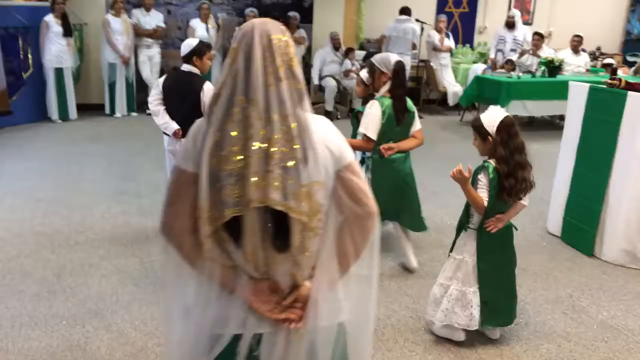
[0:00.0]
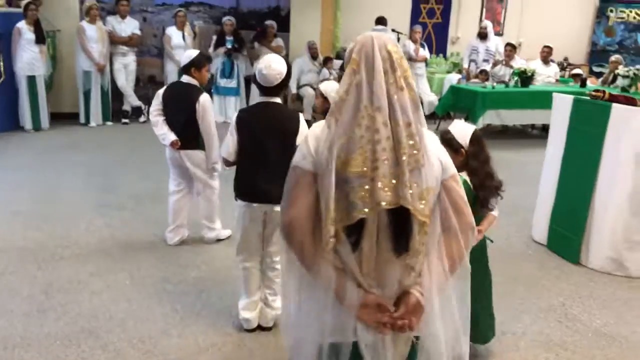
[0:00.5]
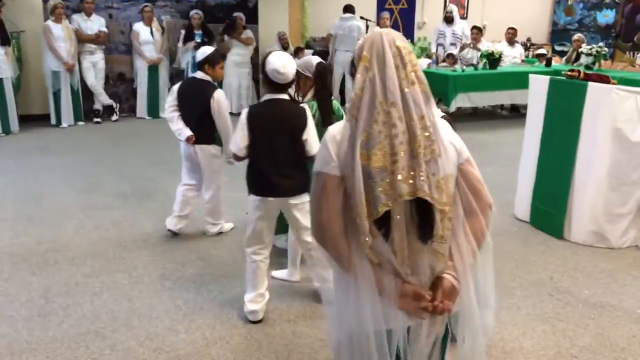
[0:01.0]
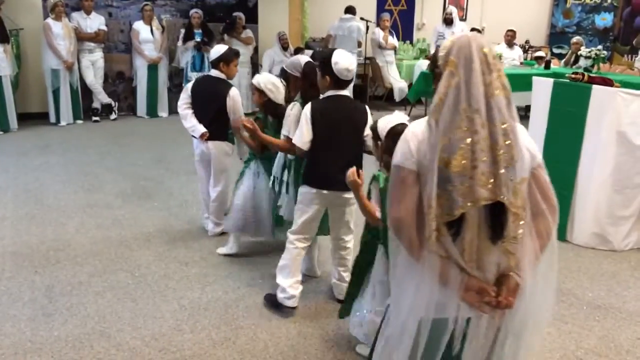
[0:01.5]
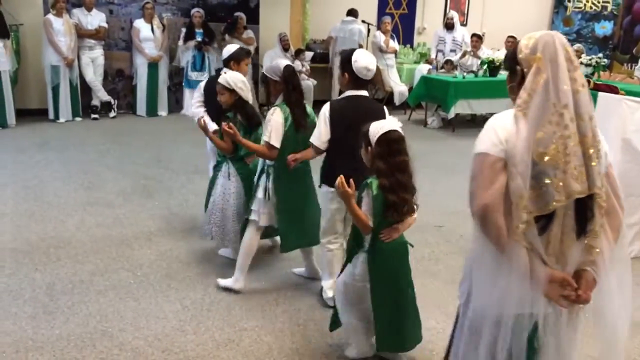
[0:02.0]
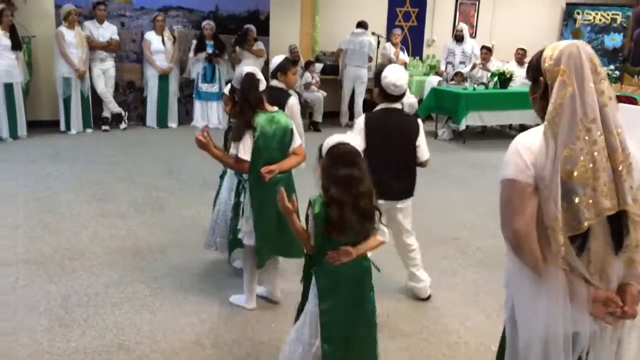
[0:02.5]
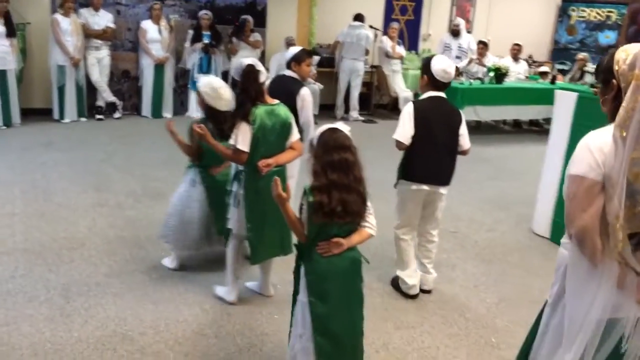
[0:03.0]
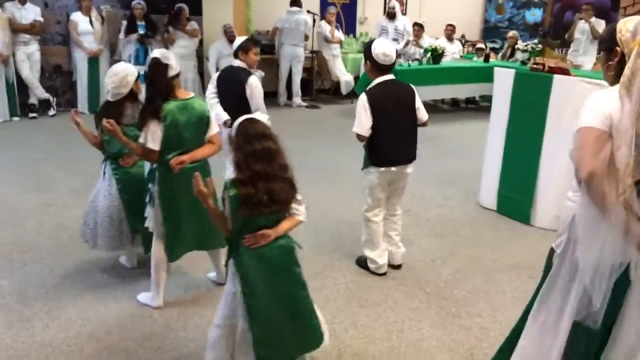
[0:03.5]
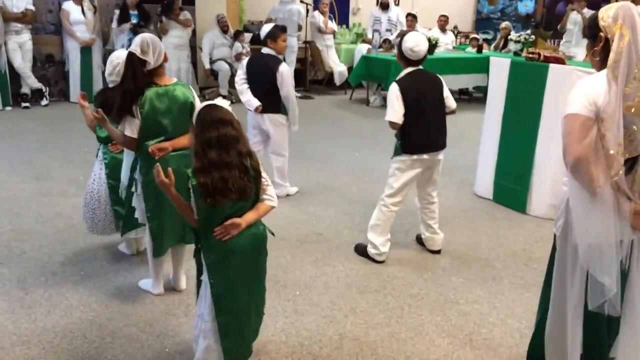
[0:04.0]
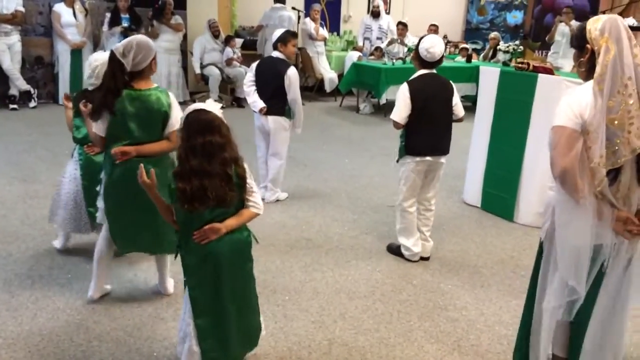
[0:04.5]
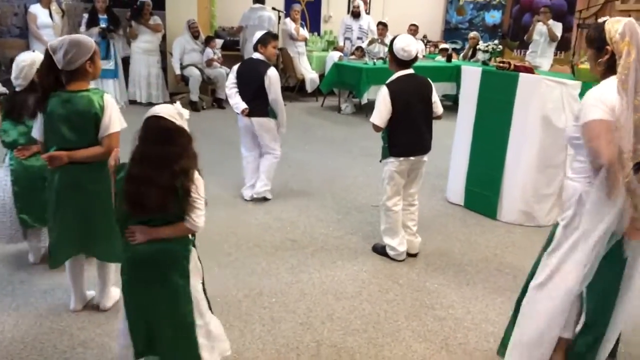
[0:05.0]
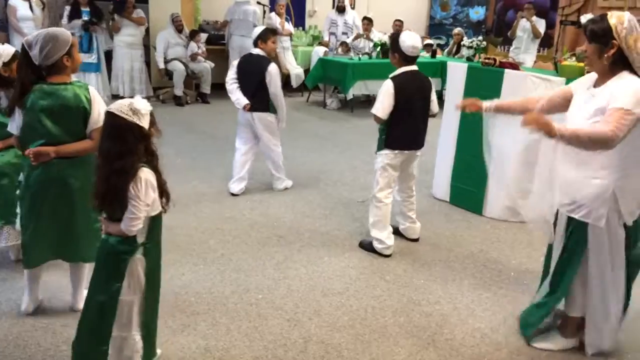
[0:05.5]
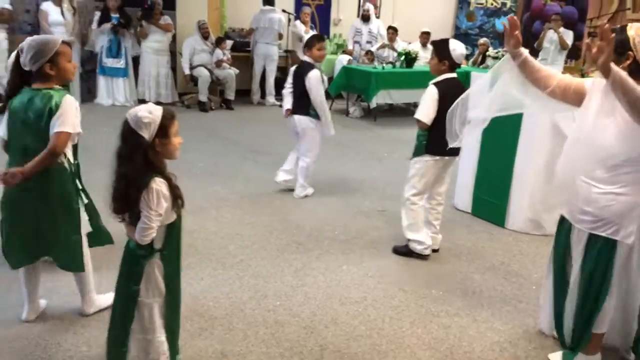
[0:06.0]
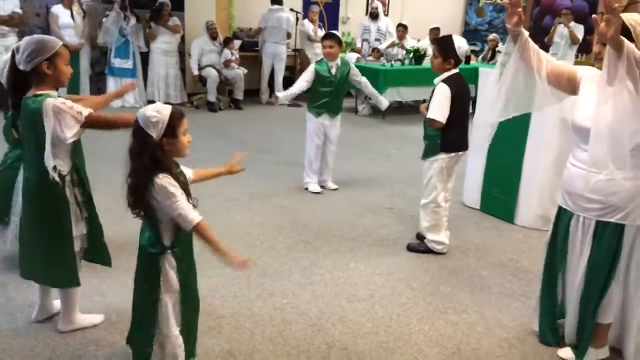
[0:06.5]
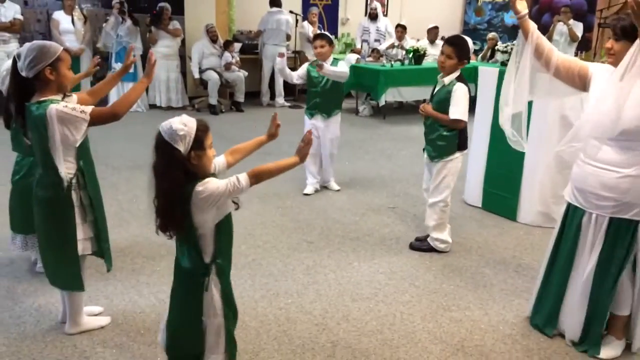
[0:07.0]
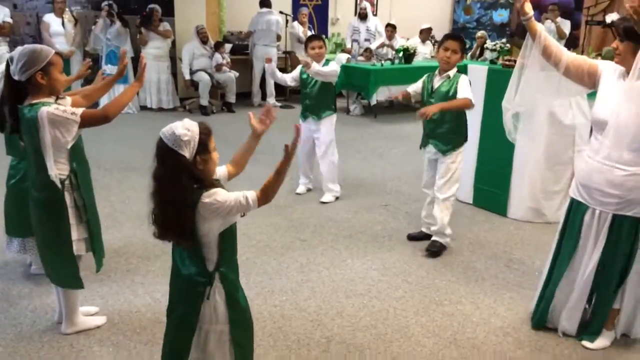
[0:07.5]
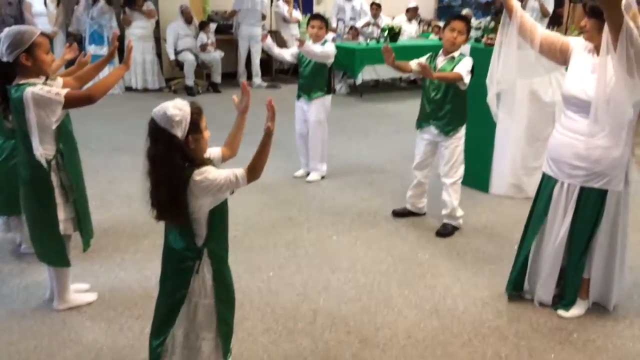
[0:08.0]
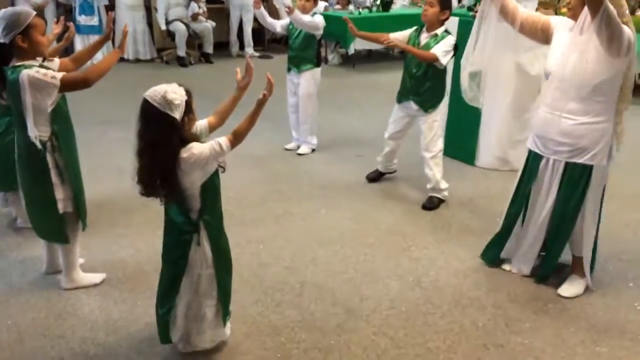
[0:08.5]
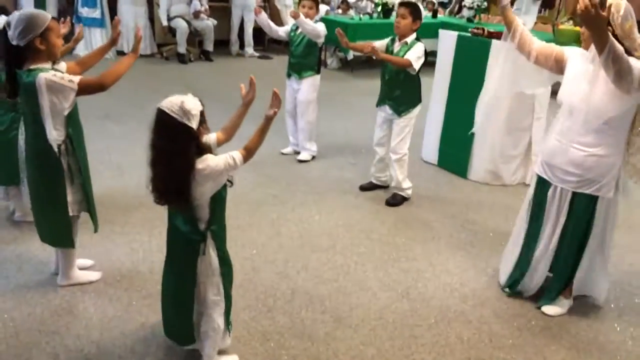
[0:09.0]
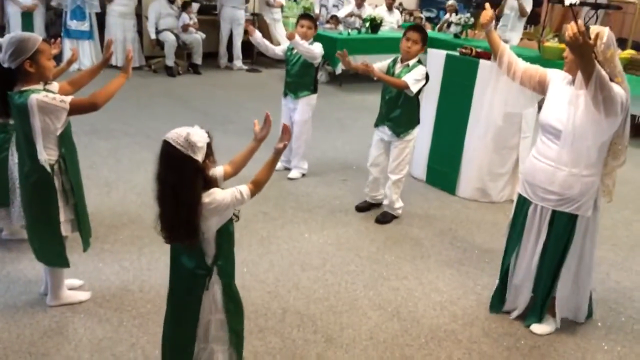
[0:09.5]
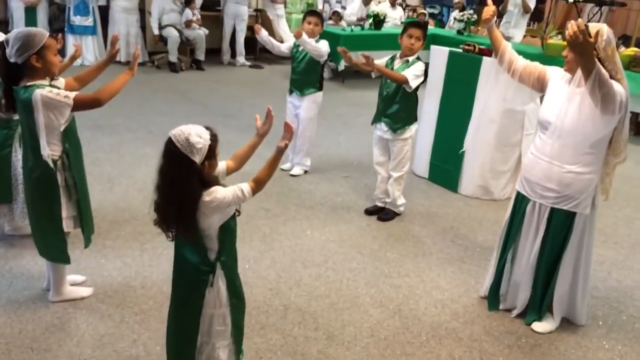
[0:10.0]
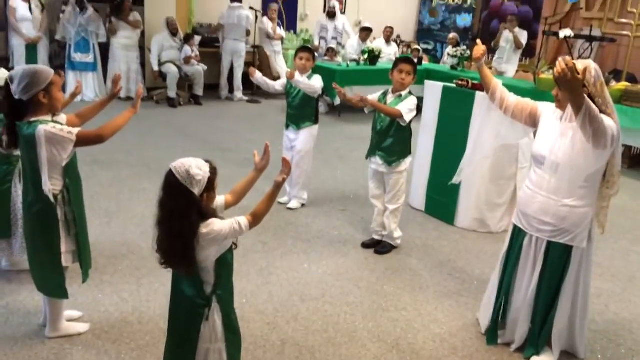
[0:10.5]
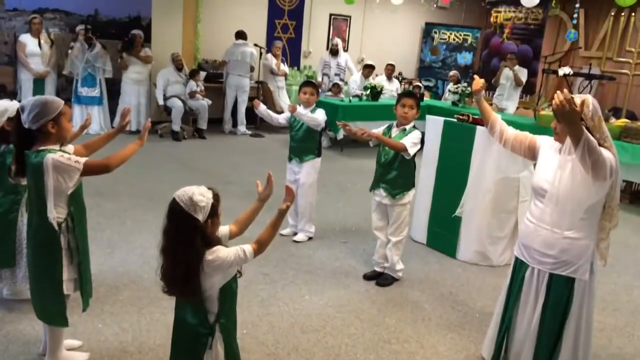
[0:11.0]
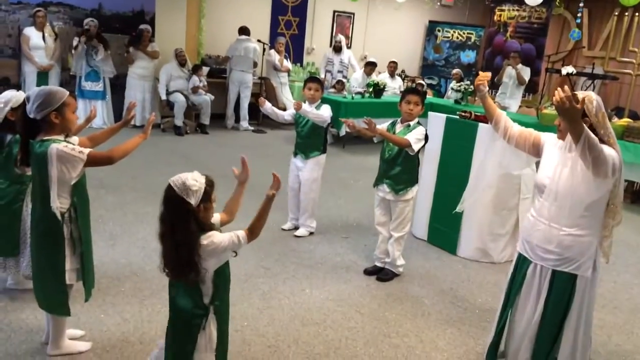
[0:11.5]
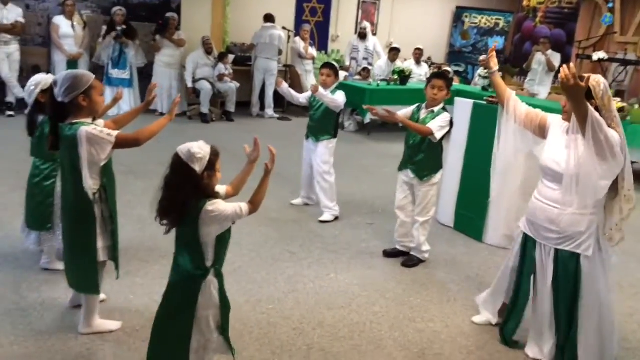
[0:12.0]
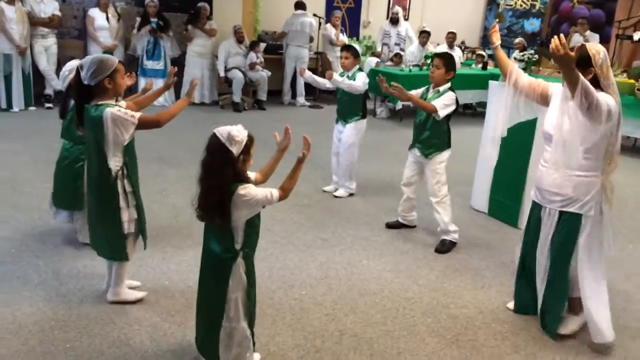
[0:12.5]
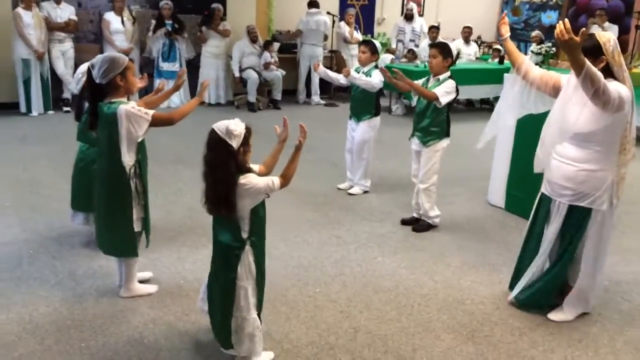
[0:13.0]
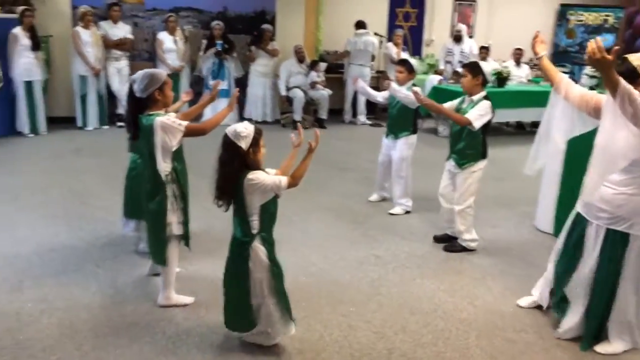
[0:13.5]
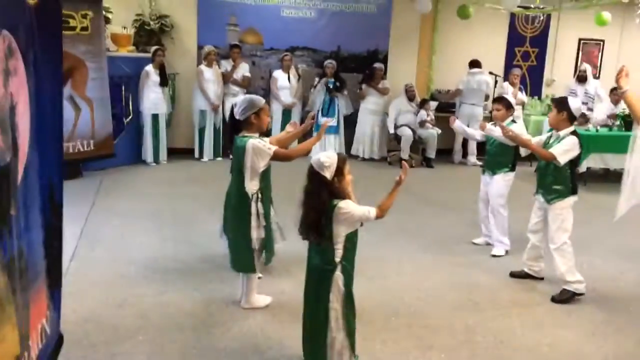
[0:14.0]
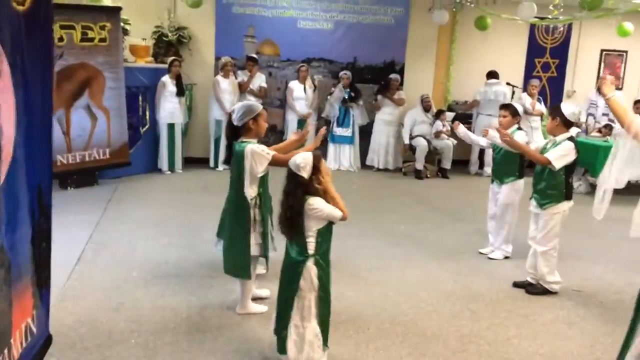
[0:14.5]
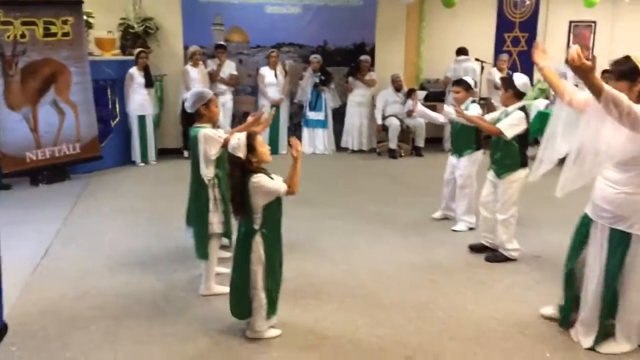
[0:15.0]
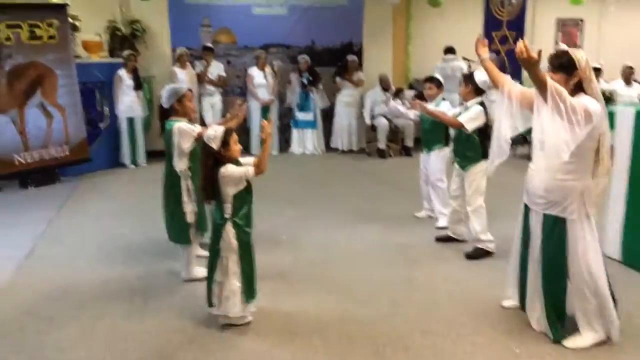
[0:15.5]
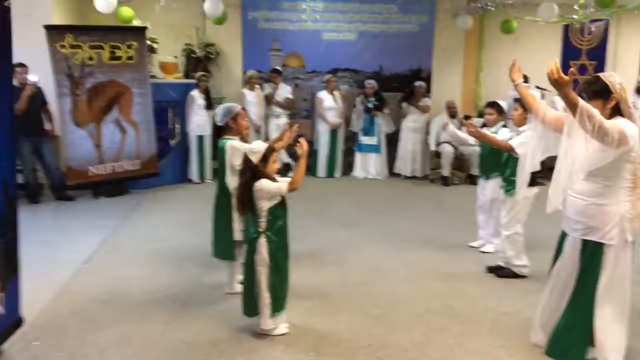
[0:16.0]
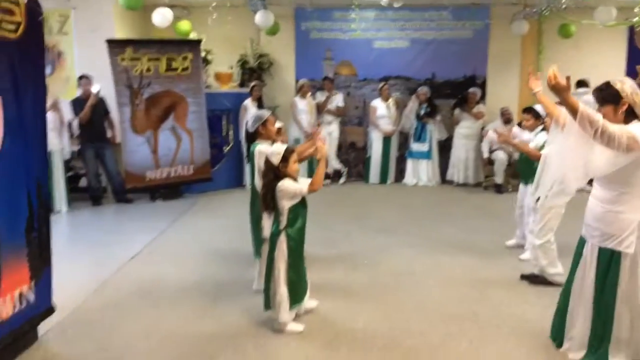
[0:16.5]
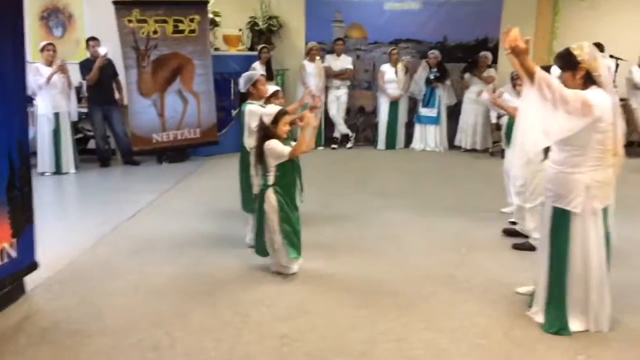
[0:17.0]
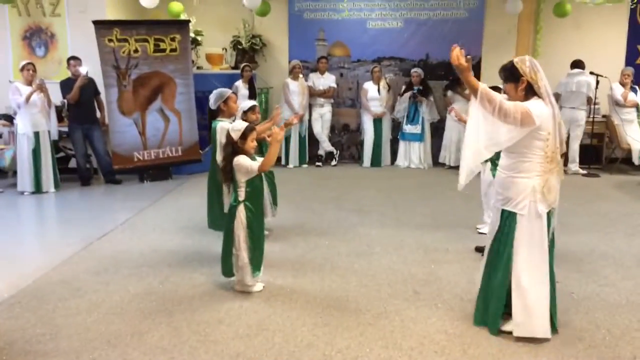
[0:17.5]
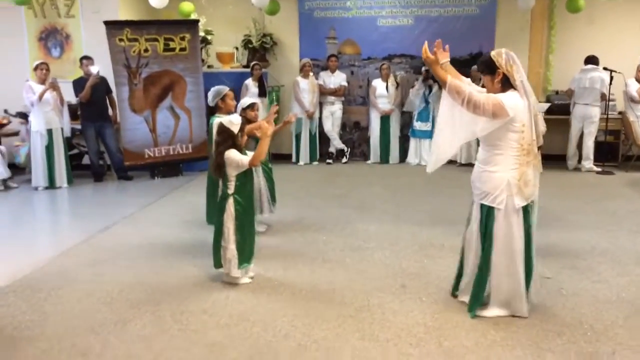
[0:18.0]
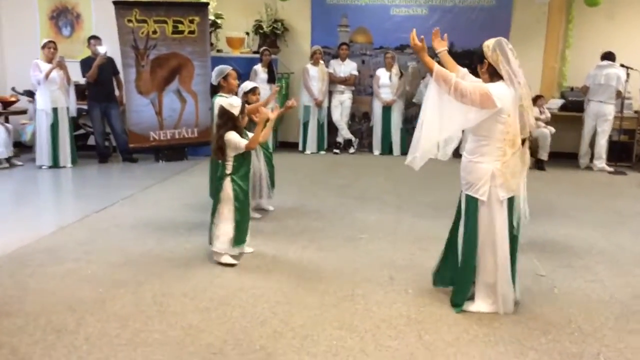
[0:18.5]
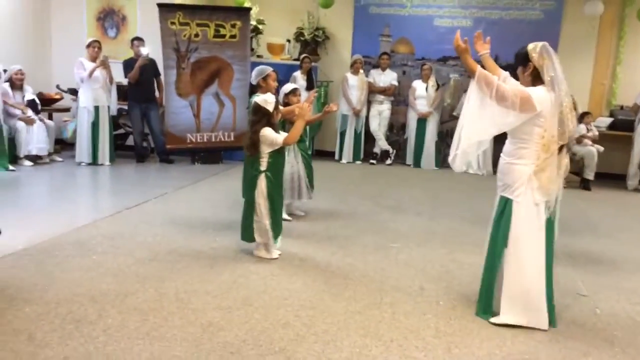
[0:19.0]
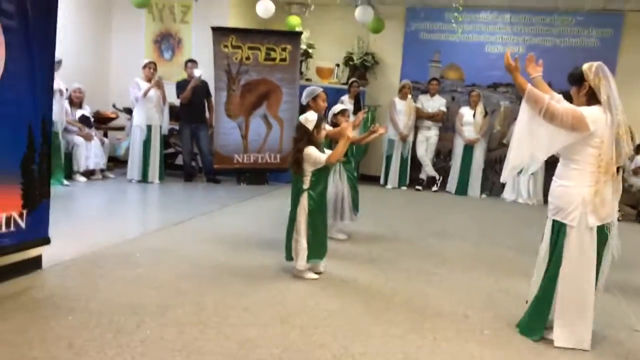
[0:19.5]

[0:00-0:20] The setting looks like some type of event, possibly in India, where children are doing a dance routine that may be part of their culture and seems somewhat like a rite of passage. The girls are on the left side of the dance, wearing green and white, and the boys are on the other side, also in green and white. A woman is teaching them the dance, or reminding them of it, as the children look at her. Their families appear to be present. It looks like a religious ceremony, with everything decorated in green and white, matching the colors the children wear. The boys have some type of headgear that resembles a yarmulke but is not one, and the girls have scarves tied around their heads.